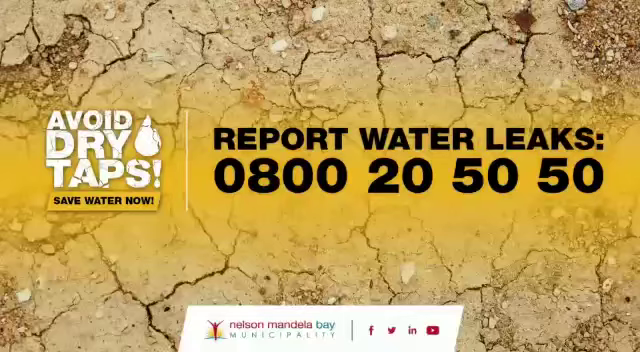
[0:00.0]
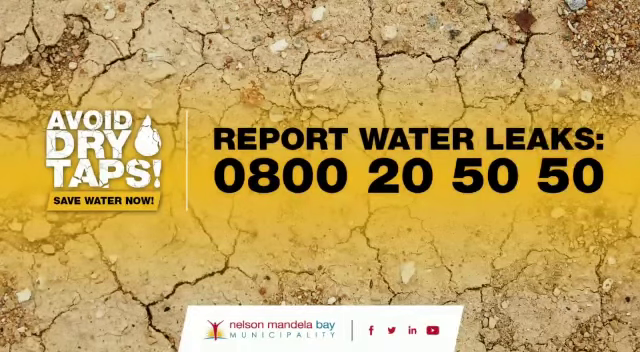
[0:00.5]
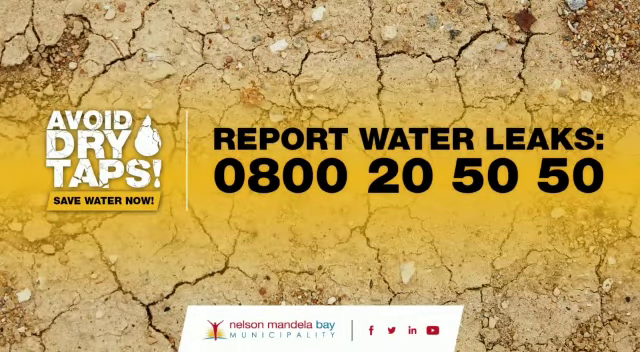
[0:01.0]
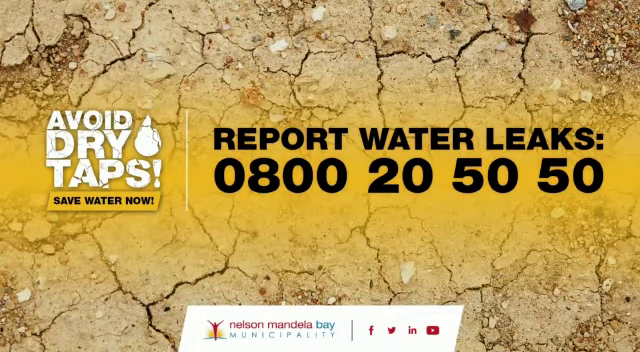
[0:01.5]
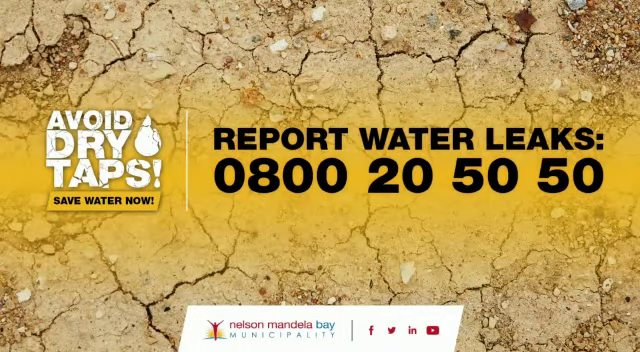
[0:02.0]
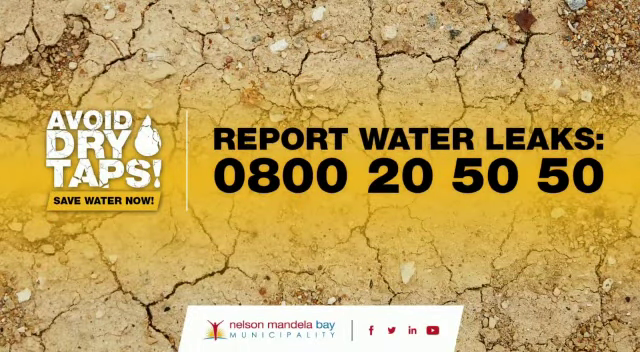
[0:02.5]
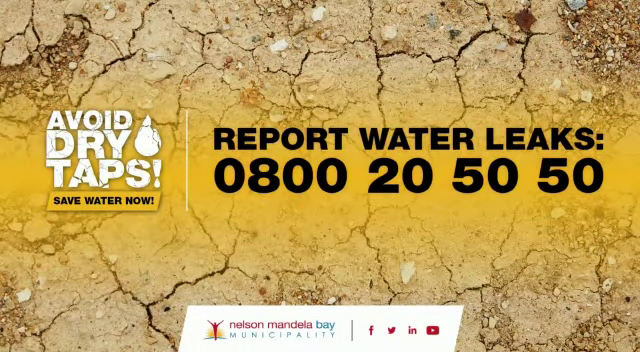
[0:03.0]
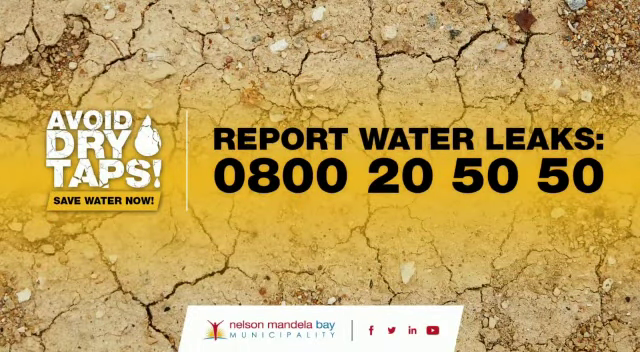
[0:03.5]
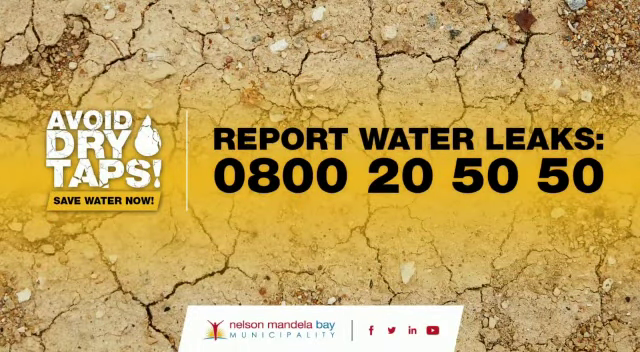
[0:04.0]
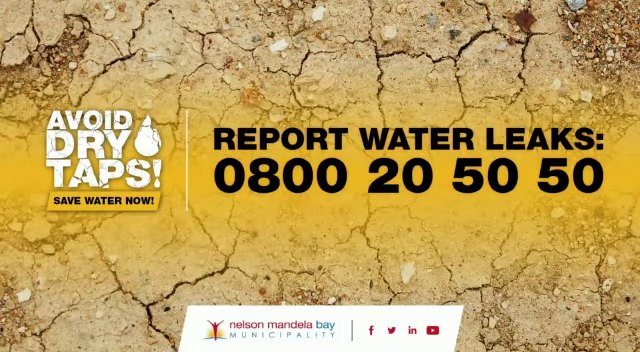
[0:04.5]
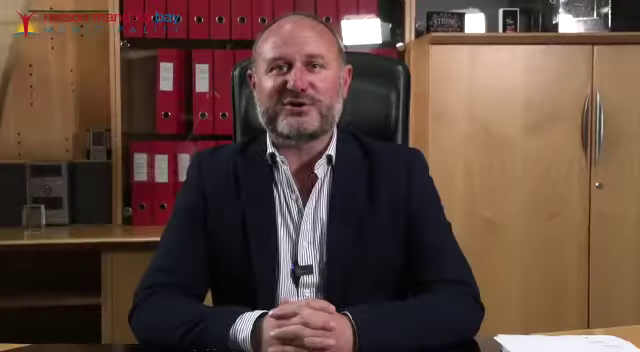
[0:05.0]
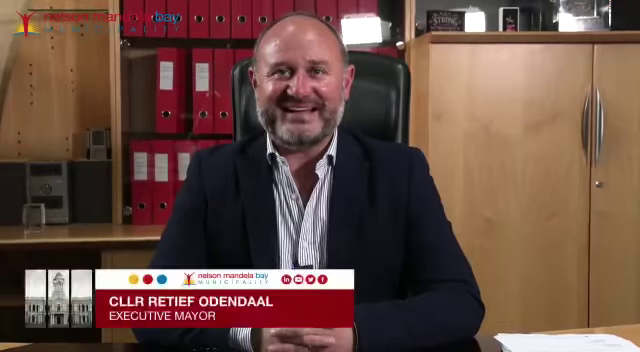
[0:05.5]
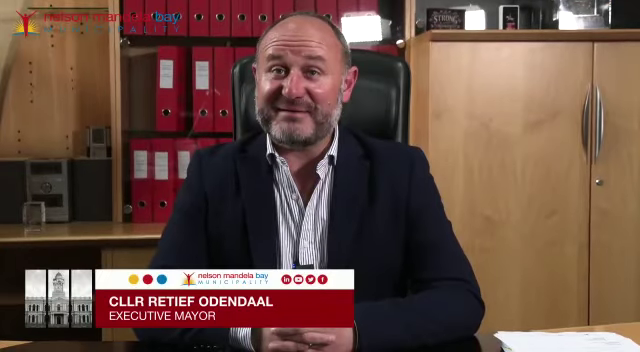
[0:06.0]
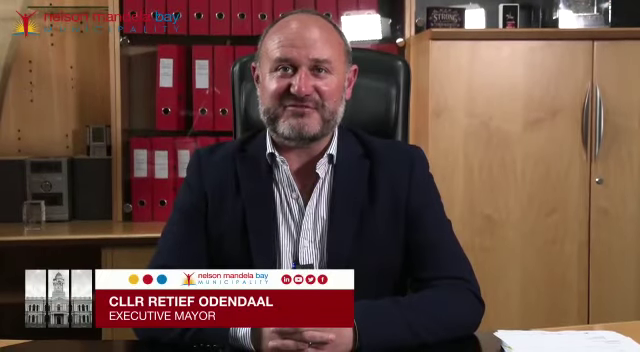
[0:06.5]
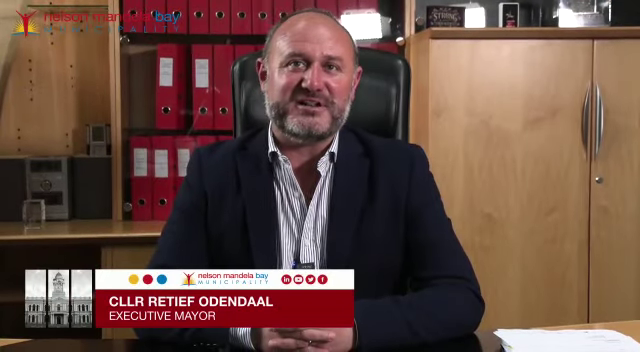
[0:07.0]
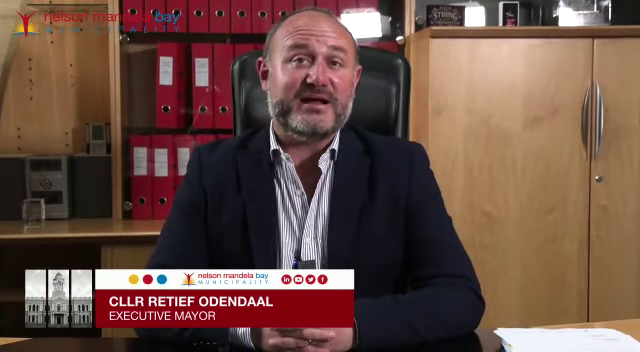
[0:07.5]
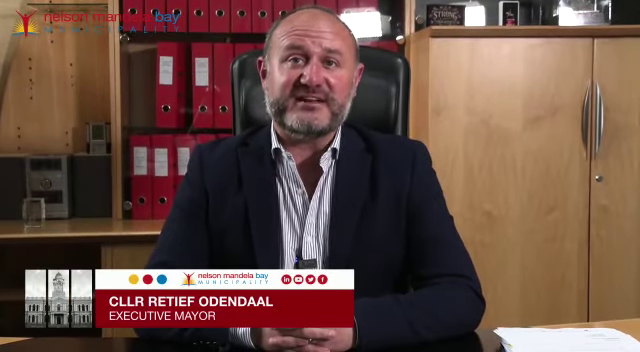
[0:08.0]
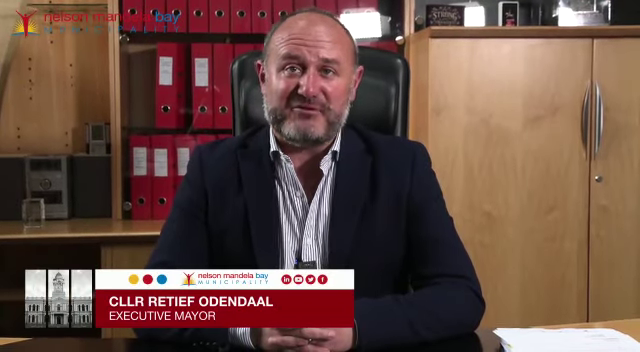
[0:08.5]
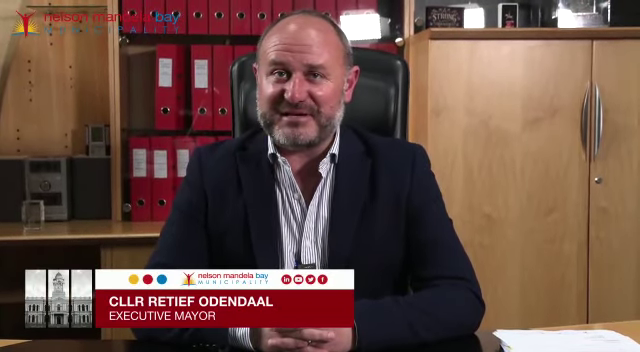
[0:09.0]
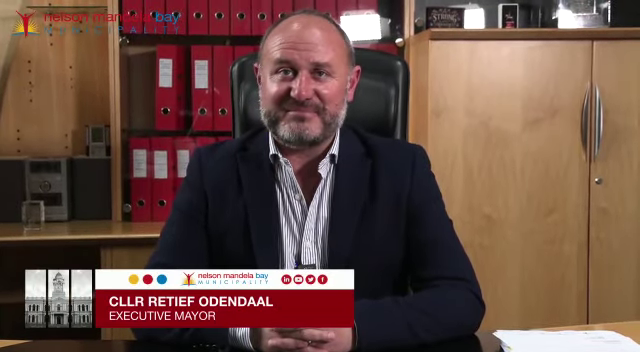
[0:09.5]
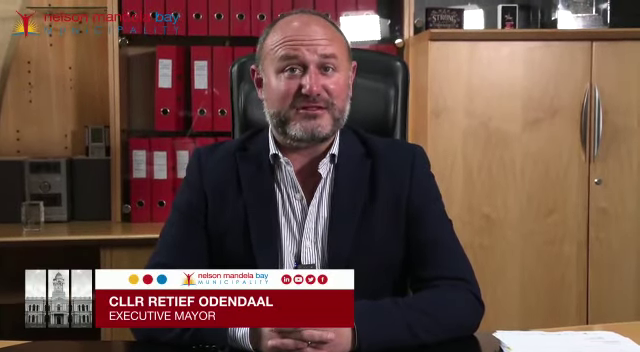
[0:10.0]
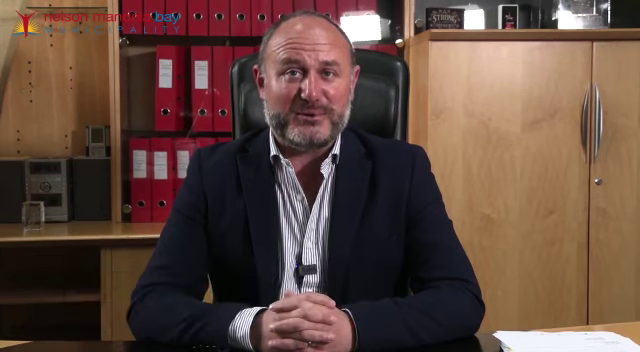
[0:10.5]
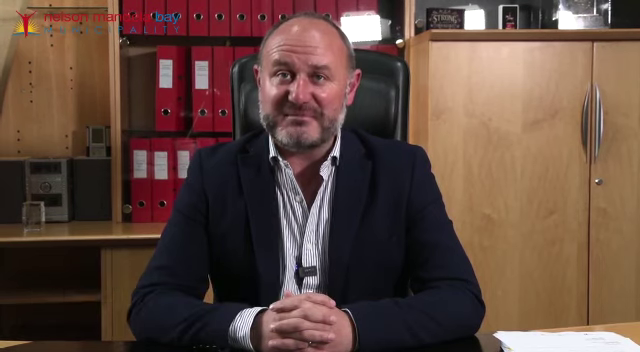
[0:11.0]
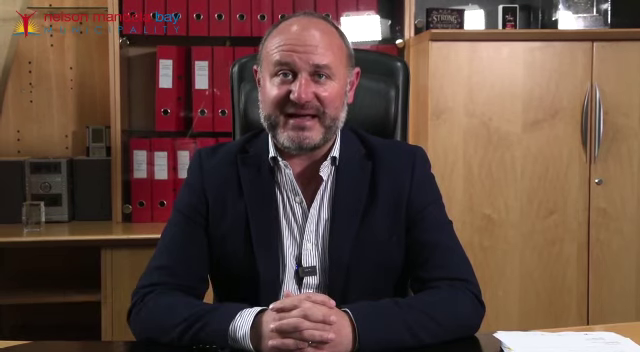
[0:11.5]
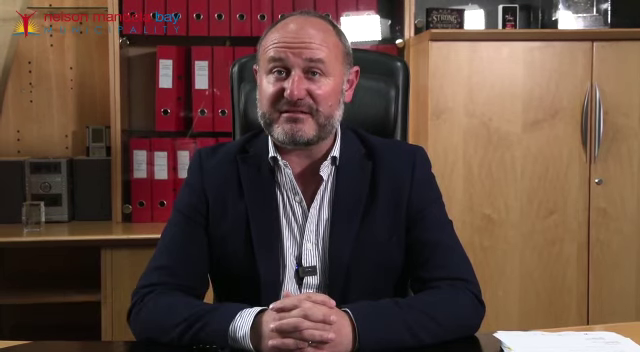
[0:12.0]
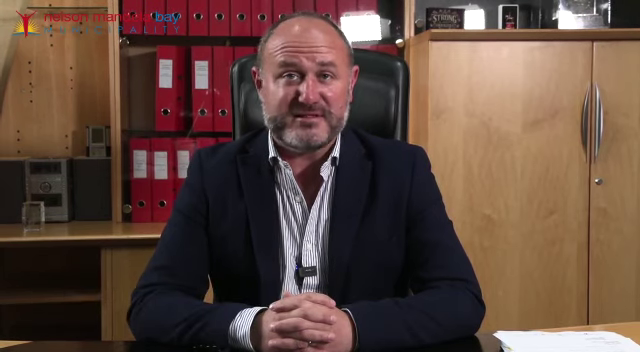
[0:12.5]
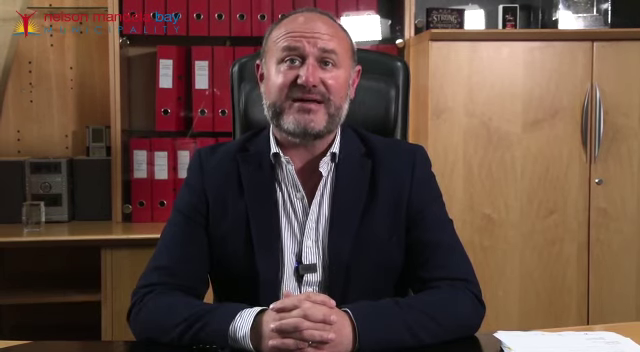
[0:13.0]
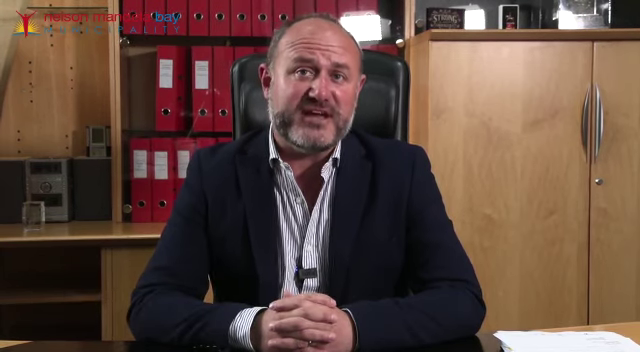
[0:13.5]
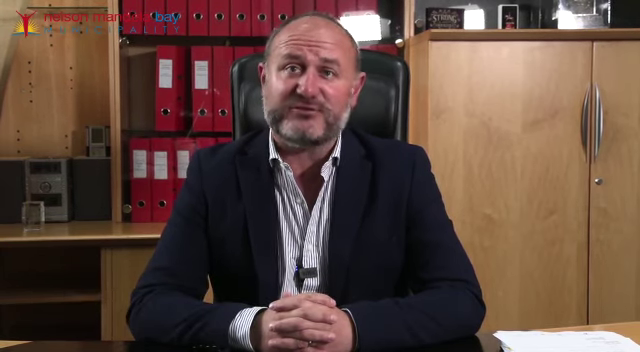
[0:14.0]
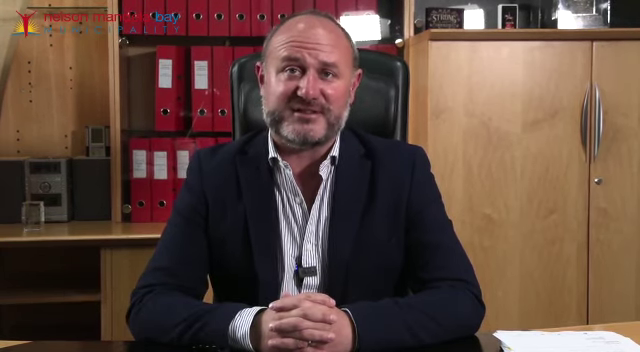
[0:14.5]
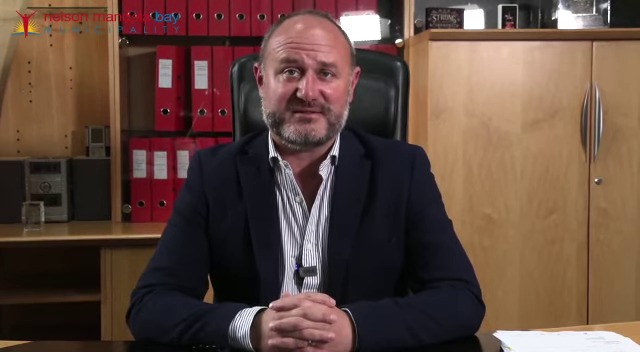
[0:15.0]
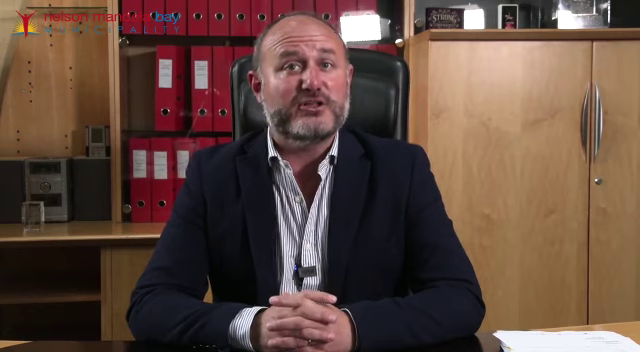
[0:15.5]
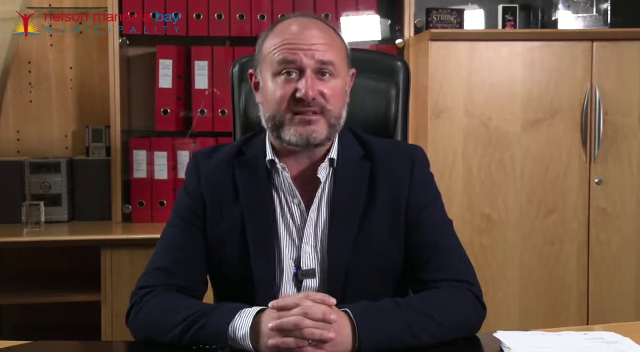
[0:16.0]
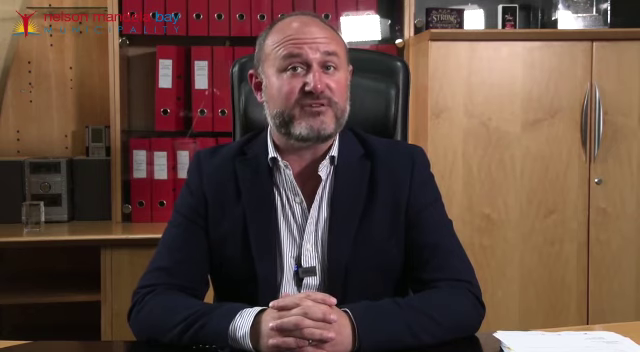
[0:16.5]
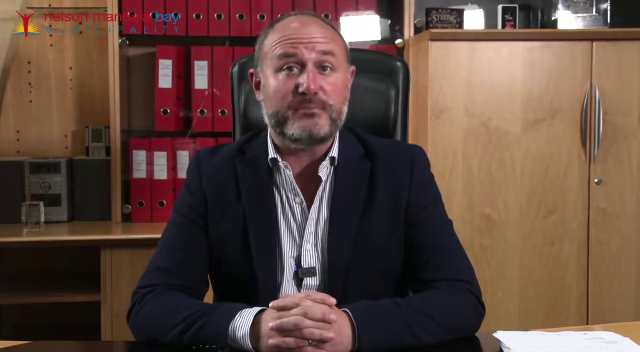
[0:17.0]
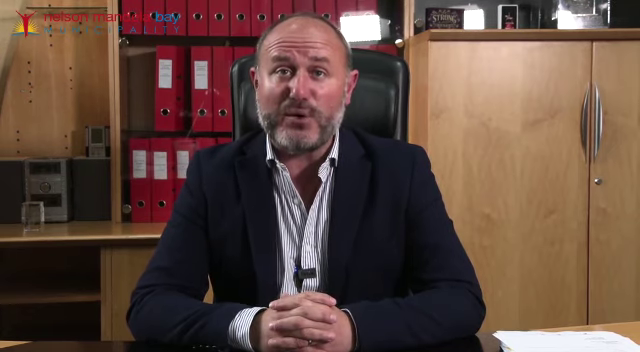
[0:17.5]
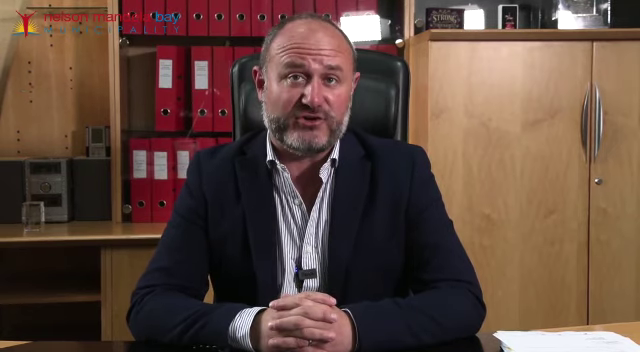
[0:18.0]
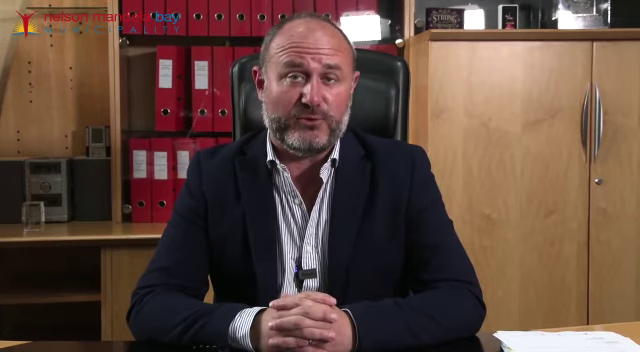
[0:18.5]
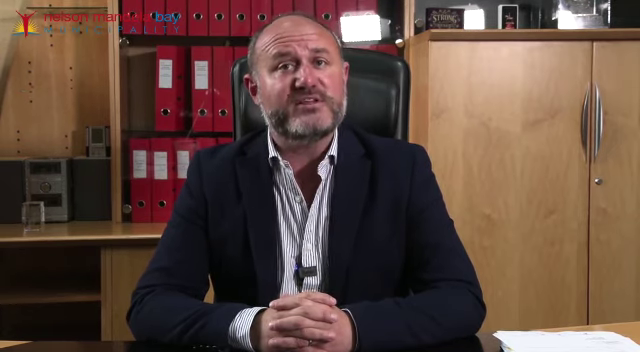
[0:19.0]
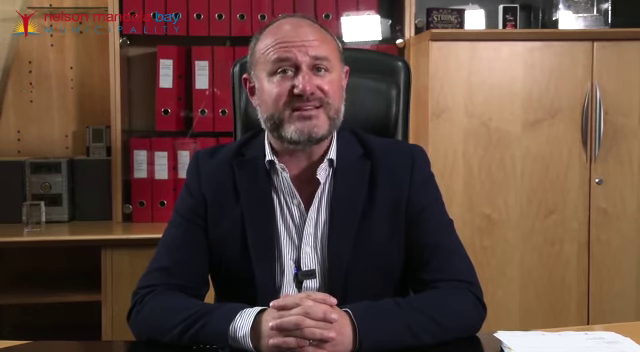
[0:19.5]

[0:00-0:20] A very dry-looking surface on the ground fills the background, and in front of it large text appears: on the left it reads "avoid dry taps, save water now," and on the right "report water leaks 0800205050." At the bottom are logos that appear to be for different social media. The video then cuts to a man who looks like the head of the organization; on-screen text identifies him as a mayor, Siller Ratif O'Donnell, executive mayor of Nelson Mandela Bay municipality. Social media handles for LinkedIn, Twitter and YouTube are shown. The man then talks toward the viewer in a very serious manner.